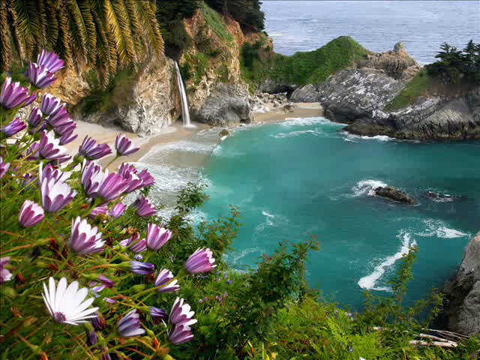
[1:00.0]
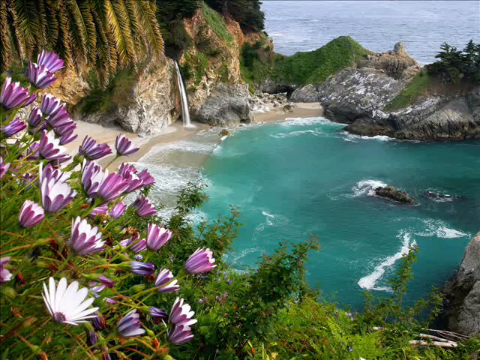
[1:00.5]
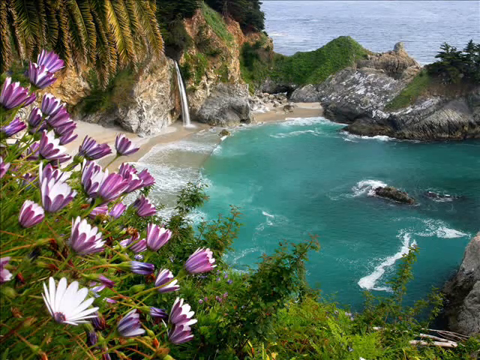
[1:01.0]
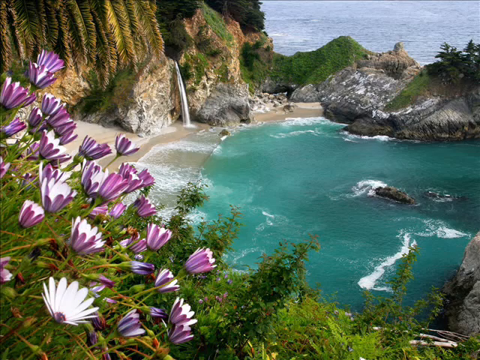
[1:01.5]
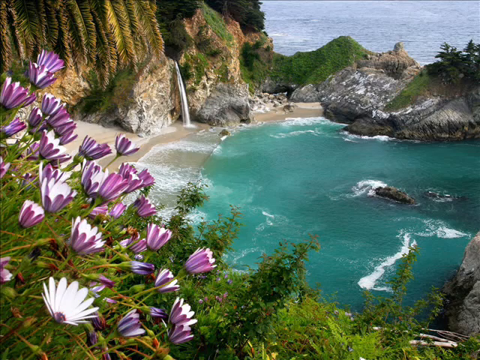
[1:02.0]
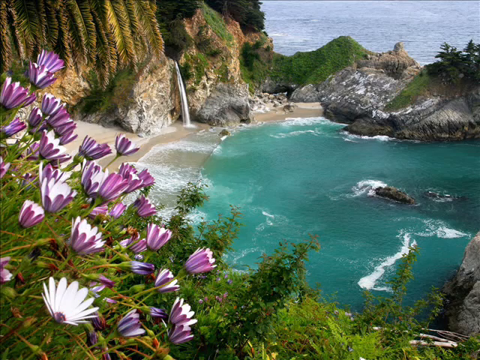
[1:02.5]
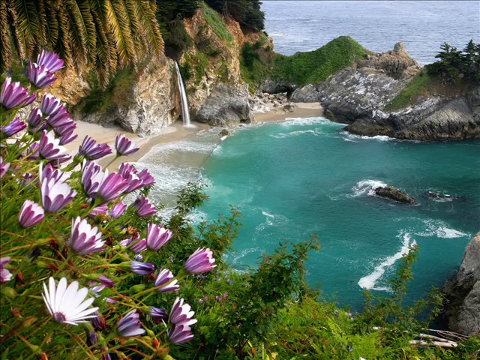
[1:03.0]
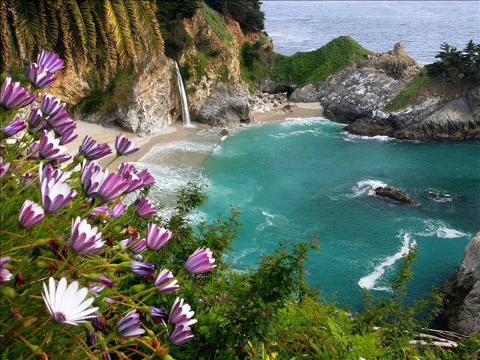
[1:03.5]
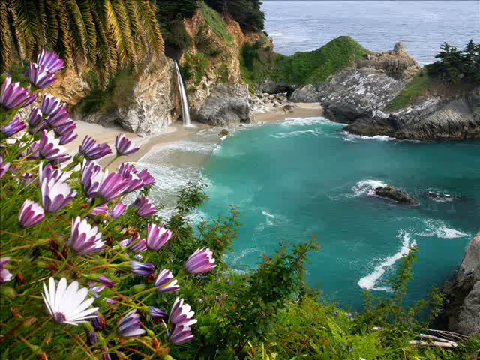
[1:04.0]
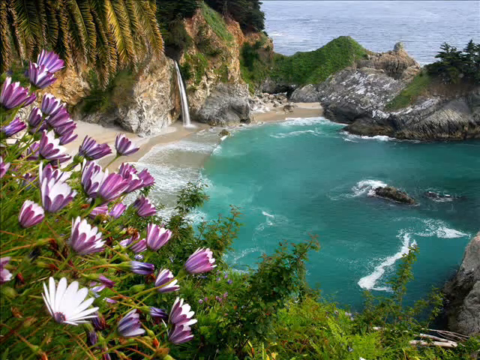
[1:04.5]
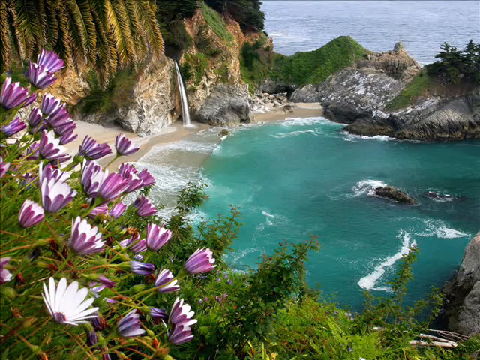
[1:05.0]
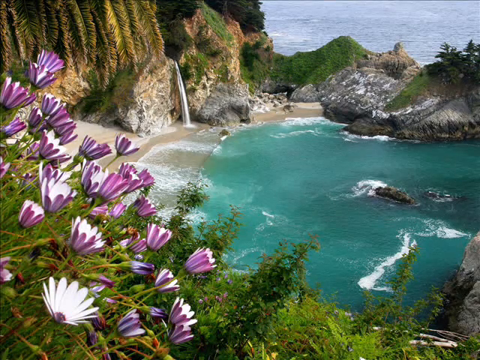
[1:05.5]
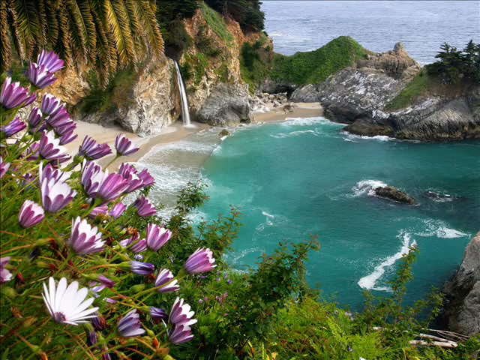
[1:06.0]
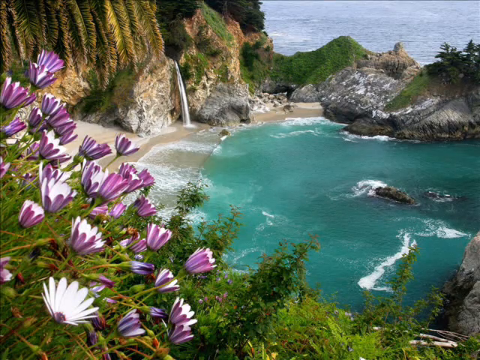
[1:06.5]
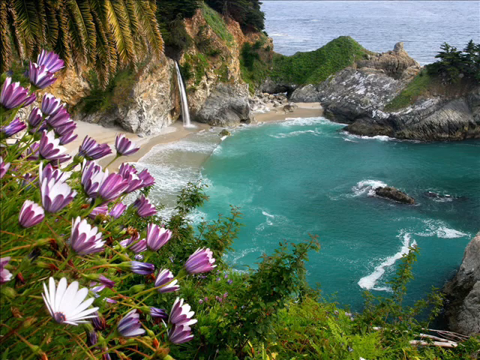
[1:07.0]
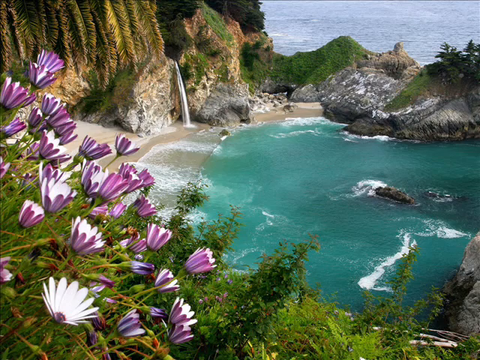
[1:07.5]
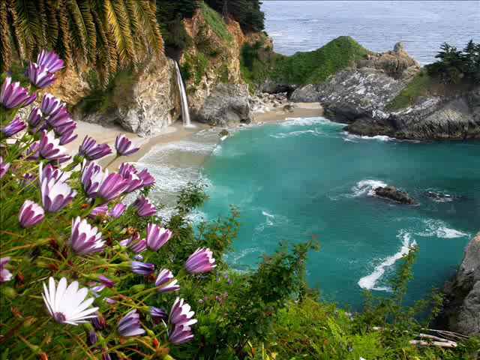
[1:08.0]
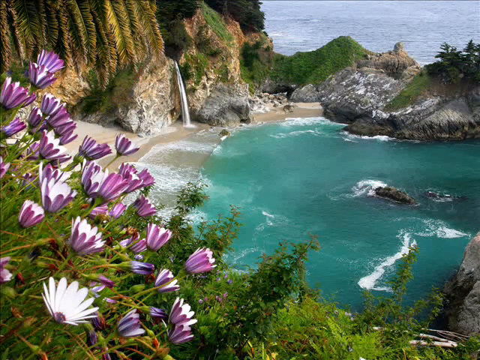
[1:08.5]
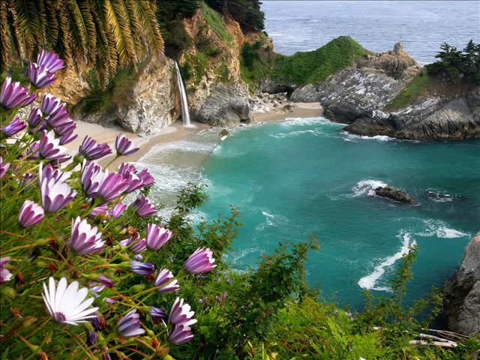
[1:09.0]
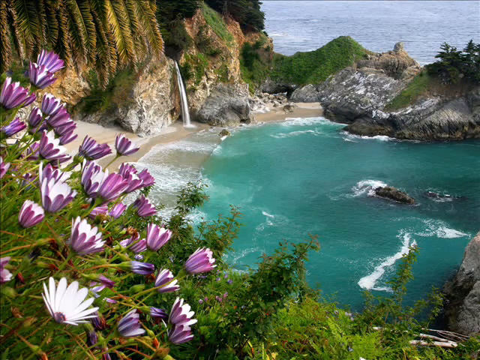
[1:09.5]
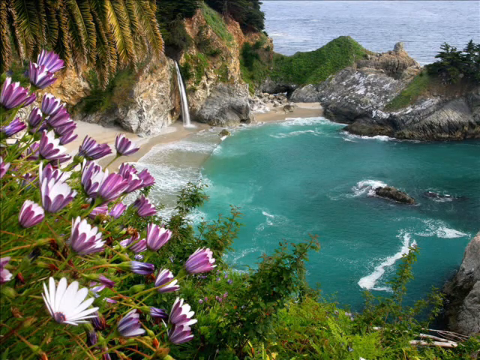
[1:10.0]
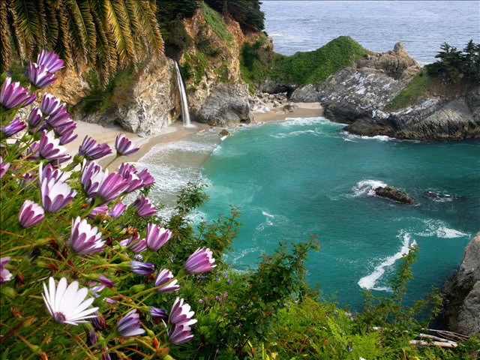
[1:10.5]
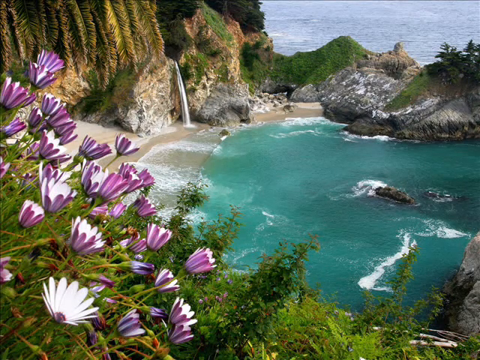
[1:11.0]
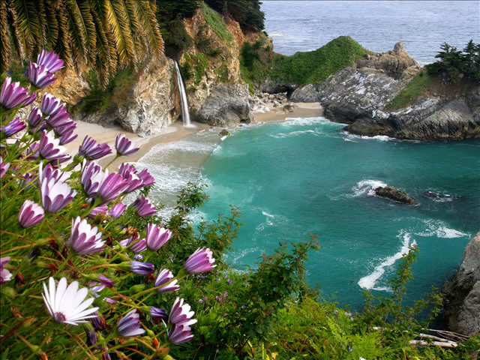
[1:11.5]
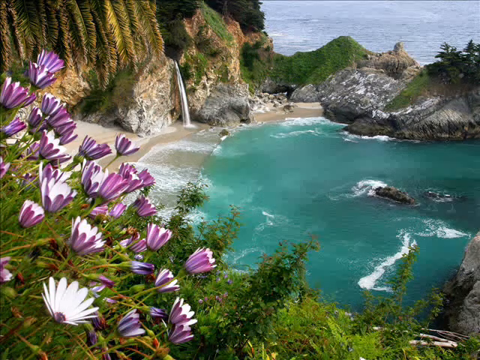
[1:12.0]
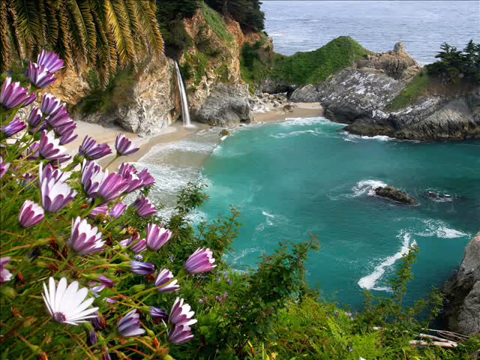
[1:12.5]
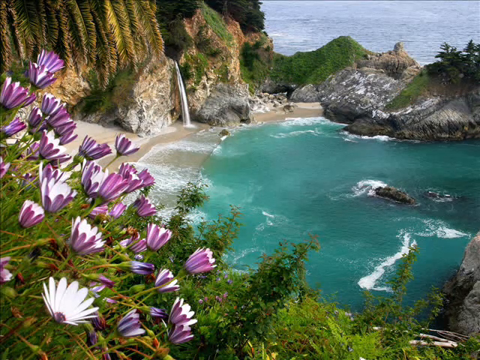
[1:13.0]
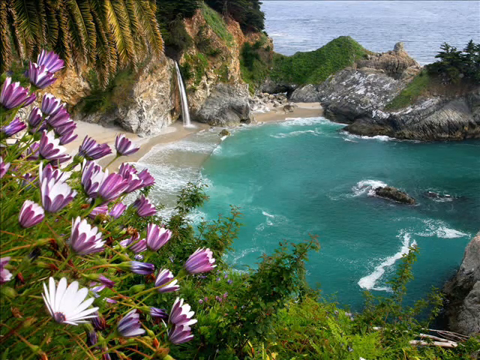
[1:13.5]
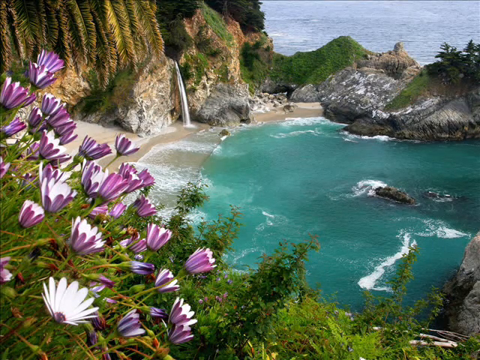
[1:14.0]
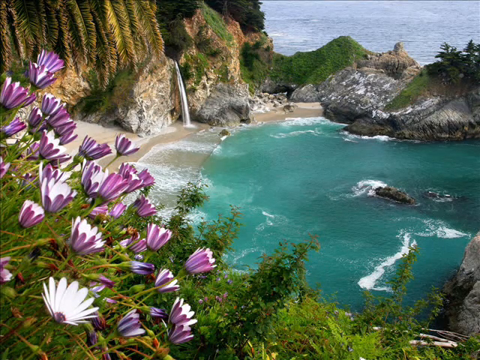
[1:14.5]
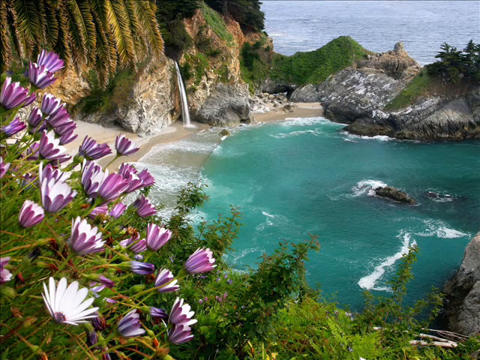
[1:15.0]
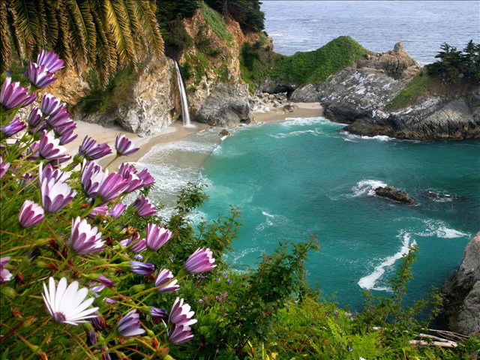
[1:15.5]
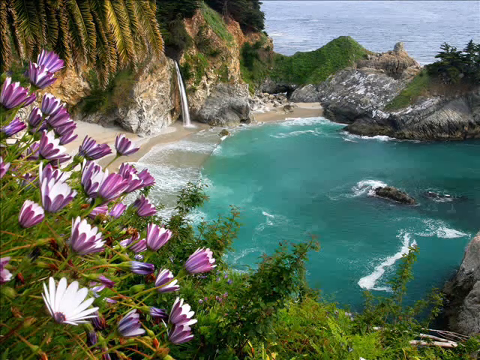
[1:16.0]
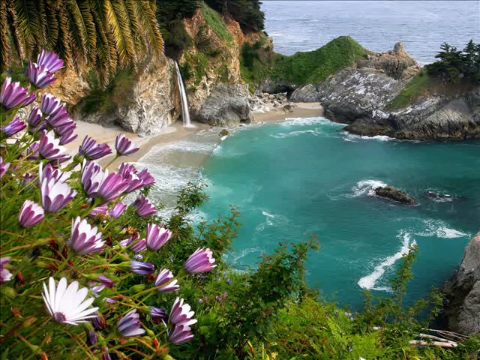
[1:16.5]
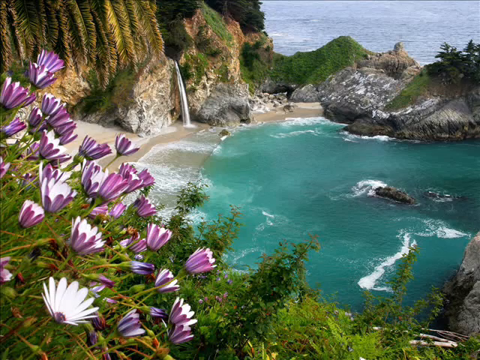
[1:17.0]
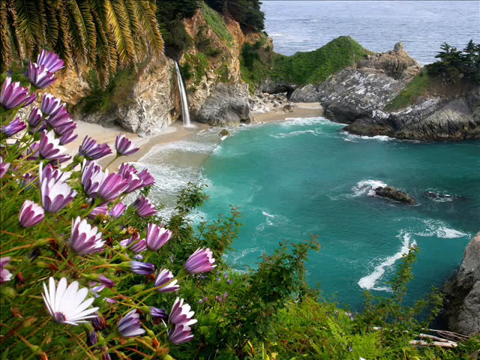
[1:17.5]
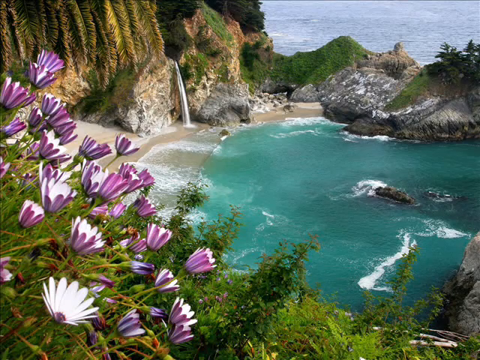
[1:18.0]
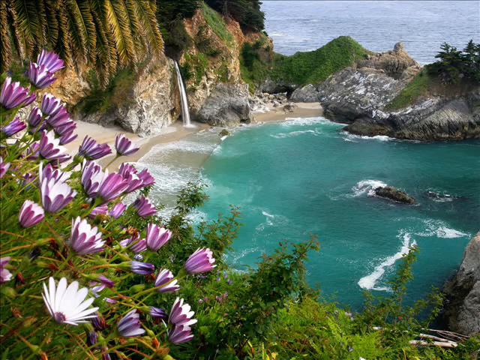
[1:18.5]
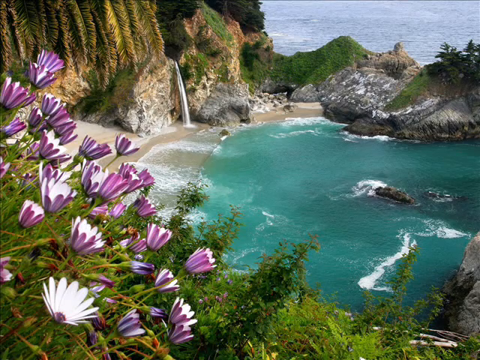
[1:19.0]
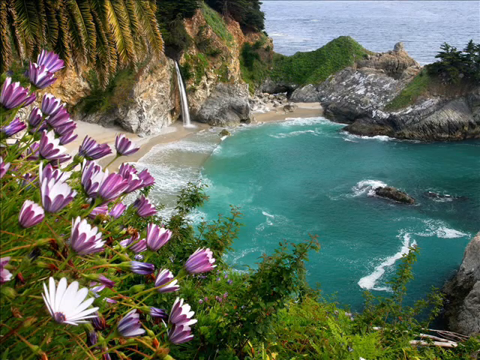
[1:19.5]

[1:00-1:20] The image remains still, with nothing appearing to happen. Beside the plain rocks on the right is a little white foamy wave heading toward the shore on the left. It has two portions: a long one that looks like a wave, and another that might just be bubbles forming along the sides. The long one looks like an L; about one third of the way down it bends a little, and the rest of its length goes slightly to the left, while the horizontal part of the L is much shorter and curves down to the right a little. The extra foam at the top looks more like a triangle pointing to the right. Above them are two rocks. One is mostly hidden in the water, showing only black spots; it is rather blurry and could possibly be an animal, but it is taken to be rock. The rock to its left sticks out much more, looking like a little hump on a hill or perhaps the back of a dinosaur, and is dark brown.